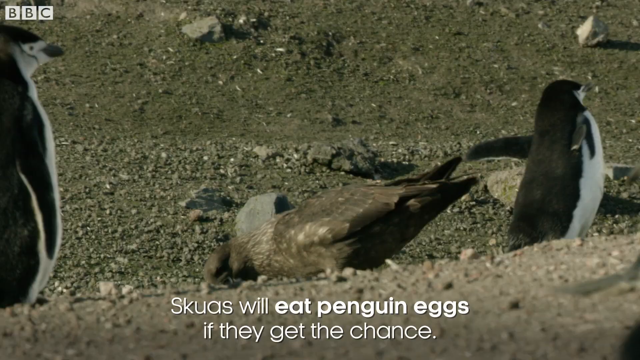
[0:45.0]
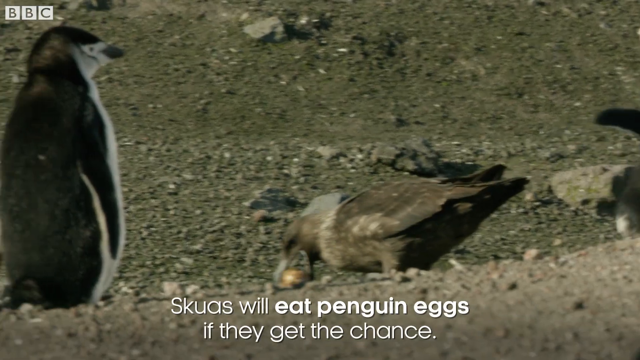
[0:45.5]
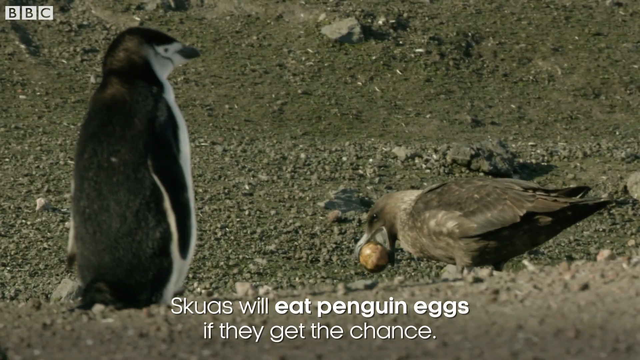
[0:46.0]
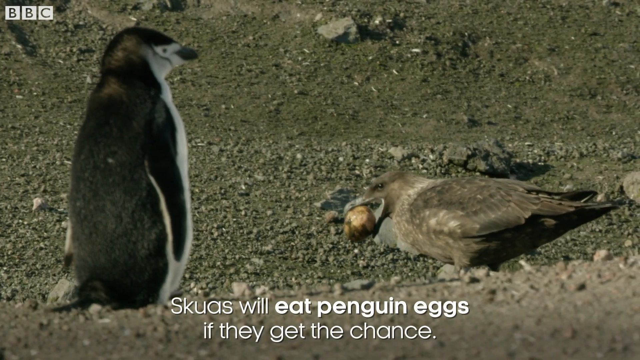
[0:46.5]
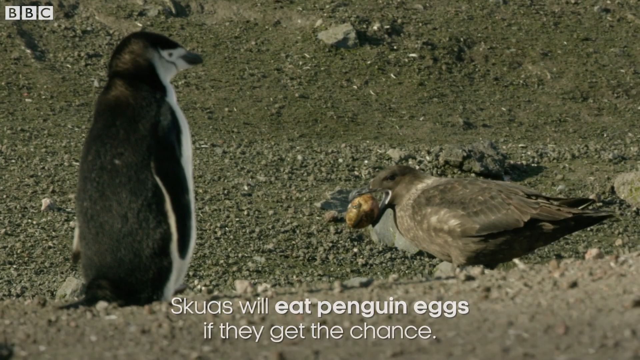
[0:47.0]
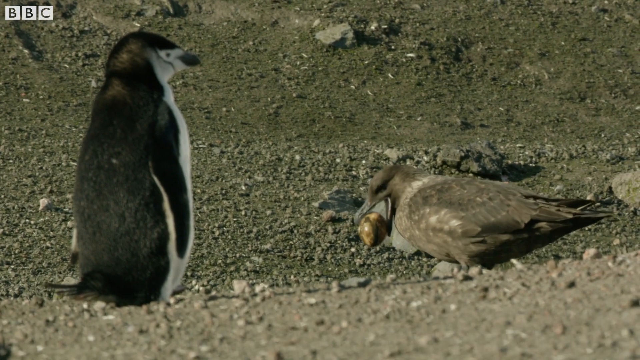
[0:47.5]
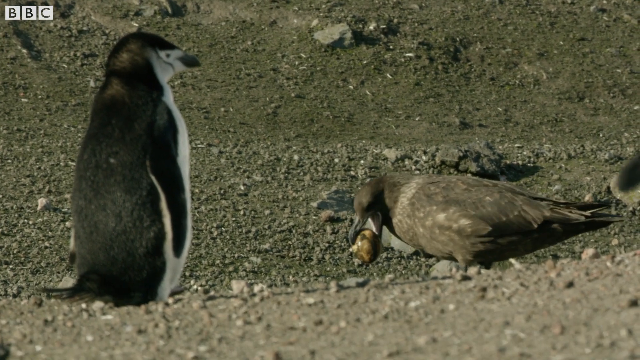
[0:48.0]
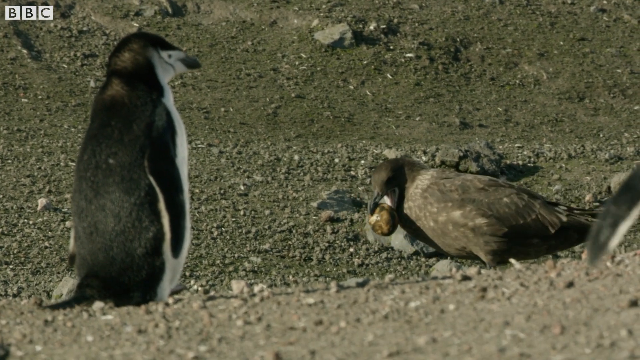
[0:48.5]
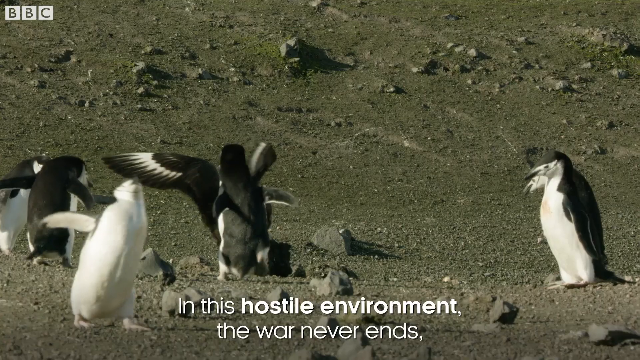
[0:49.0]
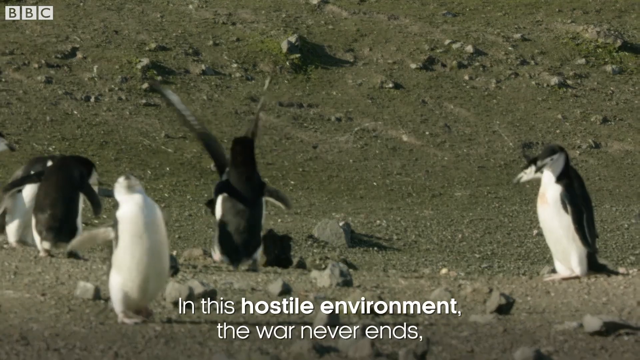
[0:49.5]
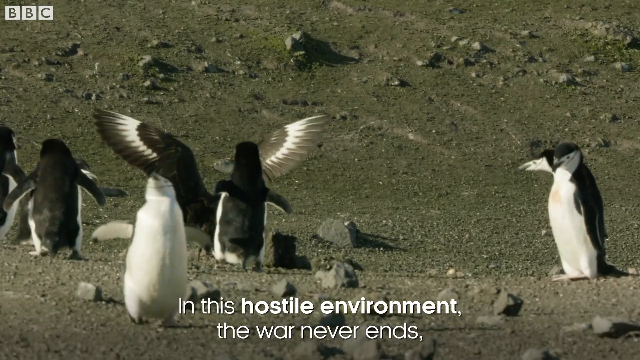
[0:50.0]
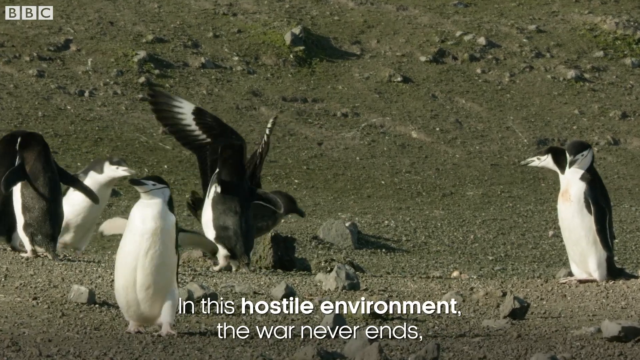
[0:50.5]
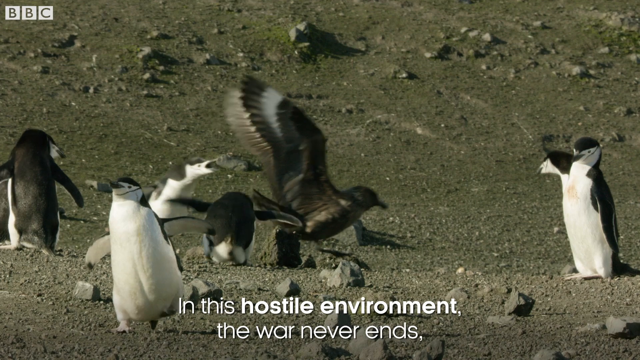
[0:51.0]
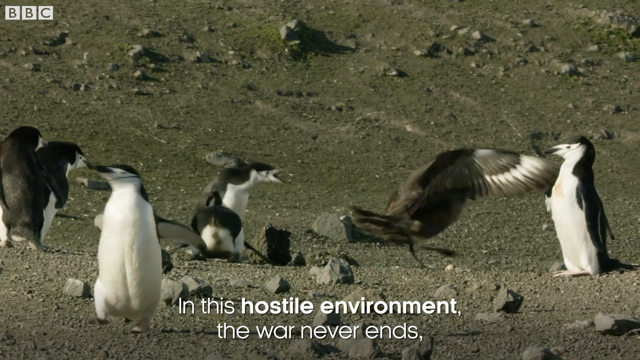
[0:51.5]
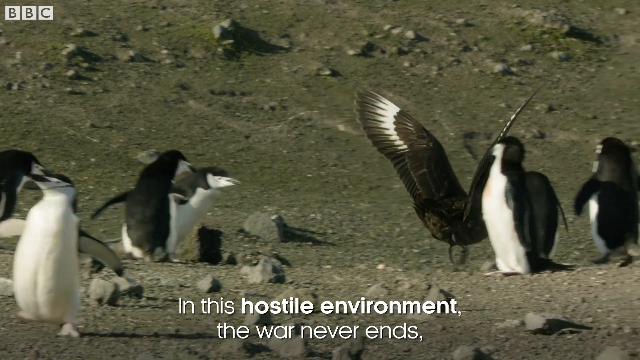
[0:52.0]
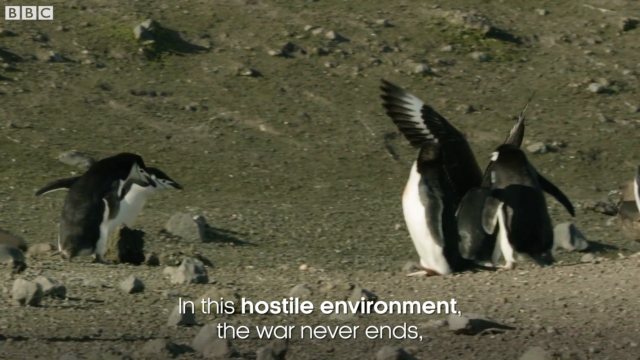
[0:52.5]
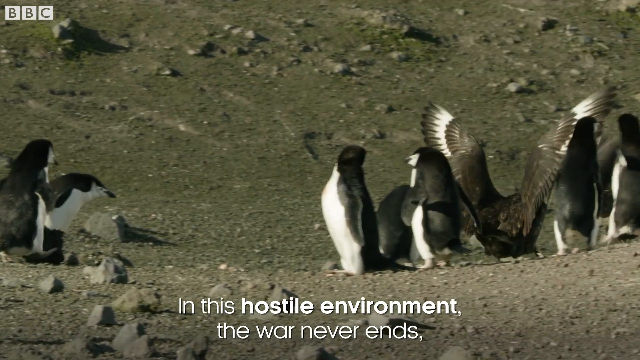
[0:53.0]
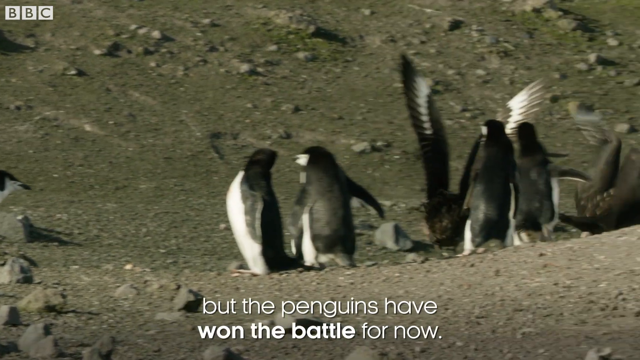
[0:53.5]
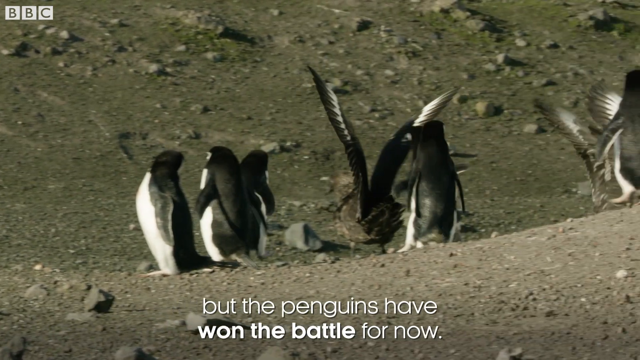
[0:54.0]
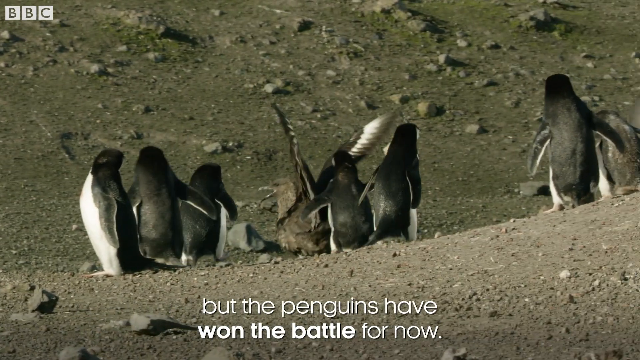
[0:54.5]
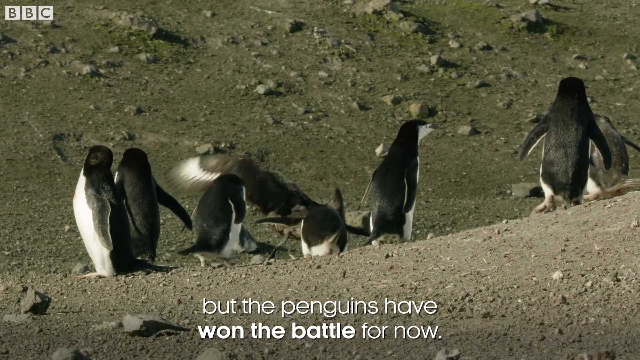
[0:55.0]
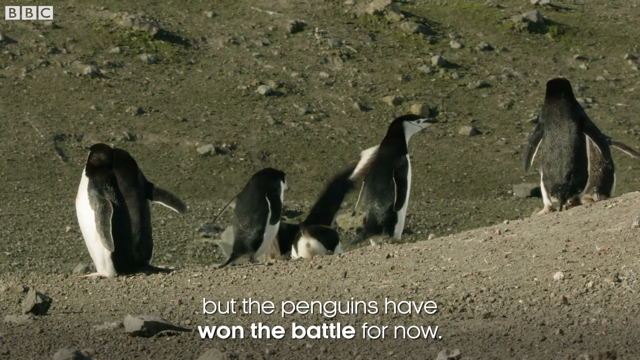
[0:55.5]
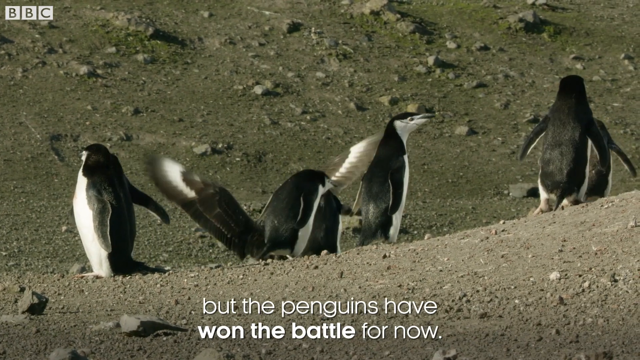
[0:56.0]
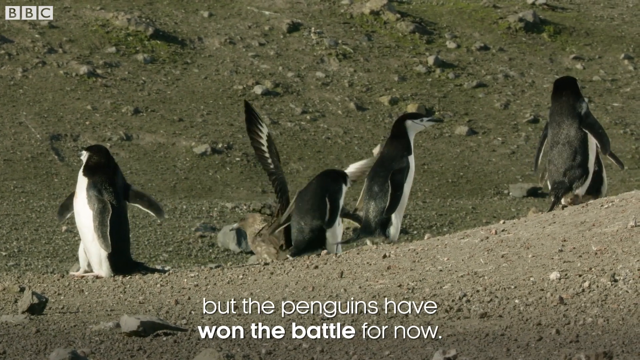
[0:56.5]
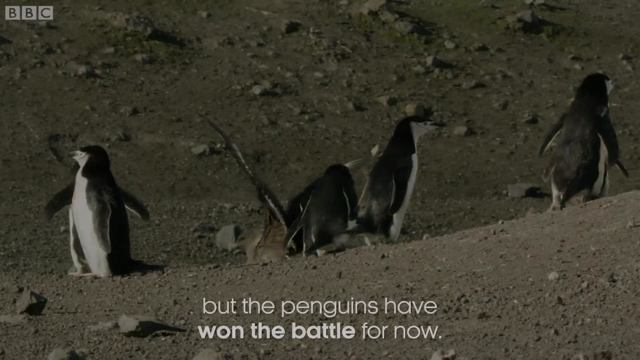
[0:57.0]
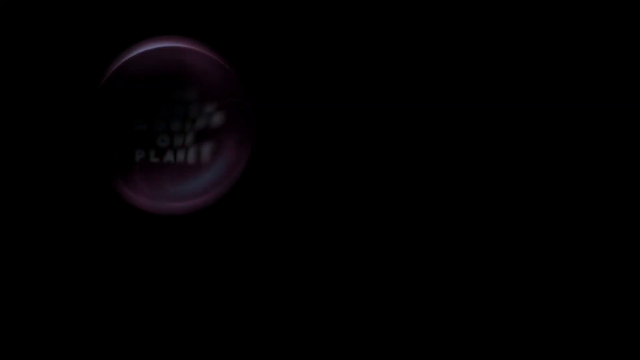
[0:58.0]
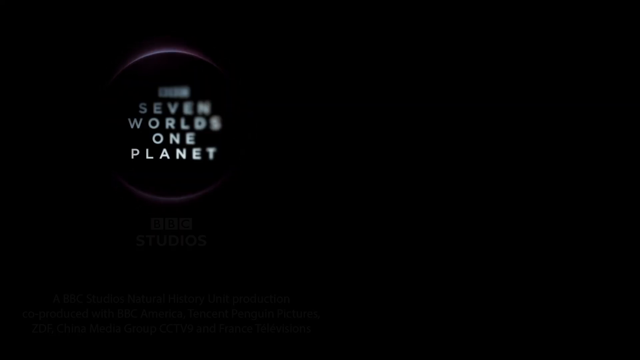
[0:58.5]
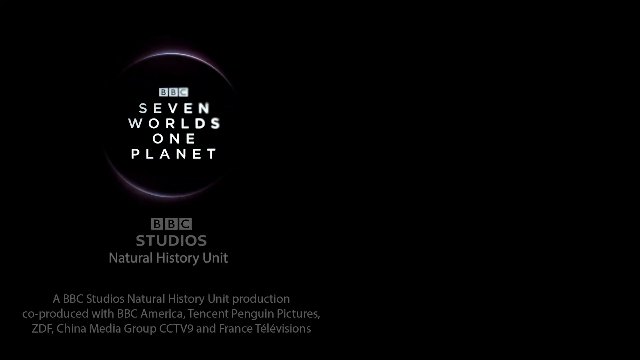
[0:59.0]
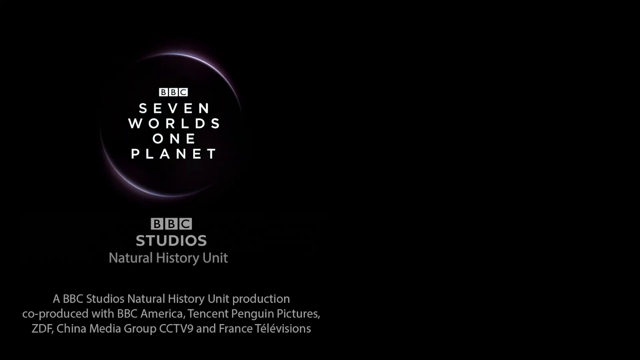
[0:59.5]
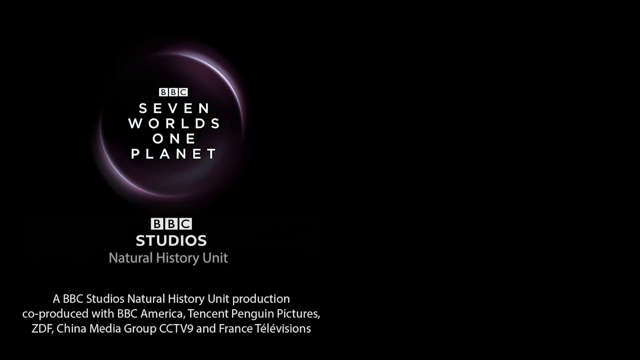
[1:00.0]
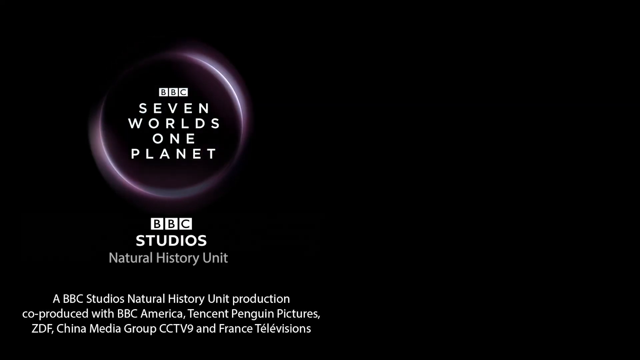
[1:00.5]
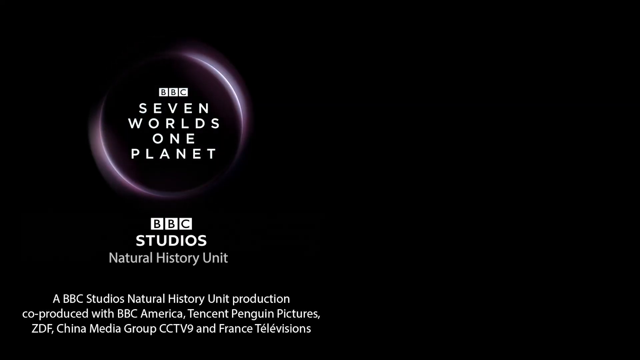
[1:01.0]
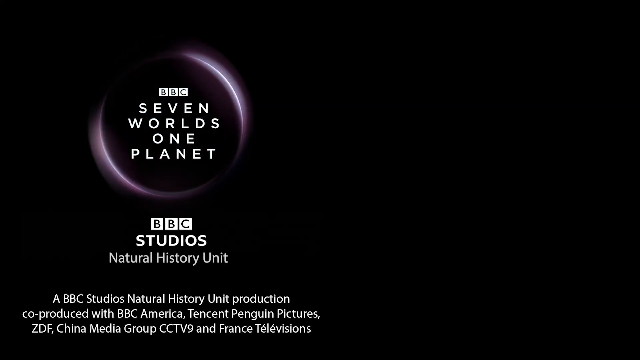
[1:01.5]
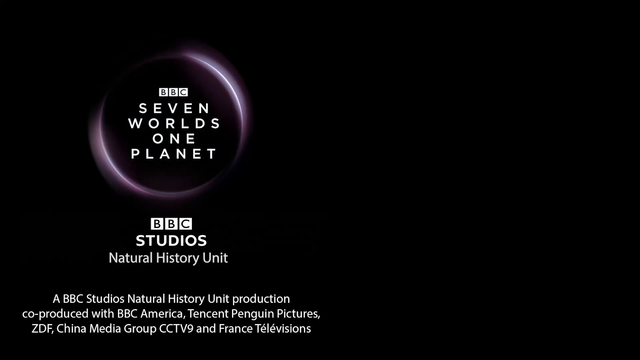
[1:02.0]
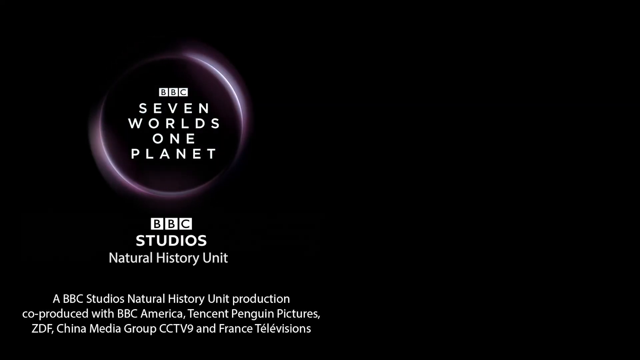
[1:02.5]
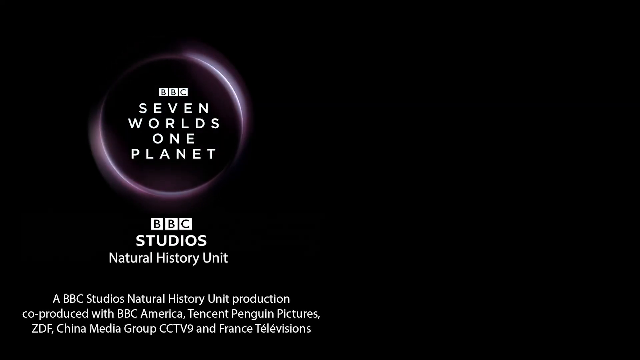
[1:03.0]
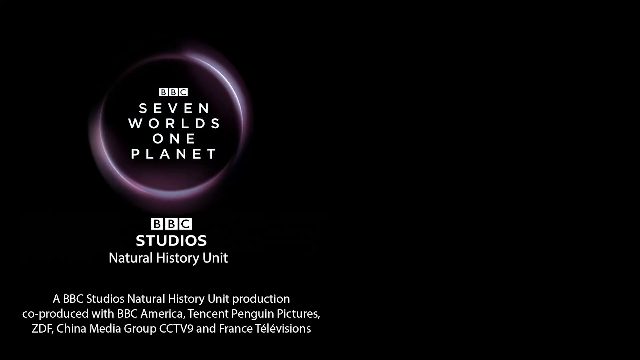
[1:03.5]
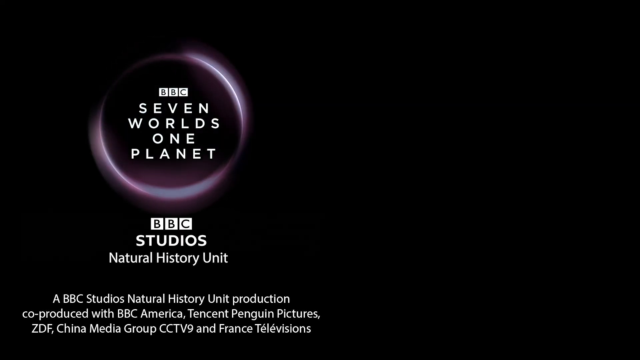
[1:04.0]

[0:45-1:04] Birds and many penguins with their eggs are on a brownish-gray, rocky, hilly, sandy beach with lots of rocks on it. A battle goes on between the birds trying to get the penguin eggs and the penguins trying to keep the birds from getting hold of them. A penguin chases after a bird that has clutched an egg in its beak and is walking away as quickly as possible with its wings spread out, trying to fly away, while several penguins poke at the bird to get it to knock the egg out of its mouth. The bird persists in trying to get the egg, and the penguins persist in making sure their eggs are not stolen.